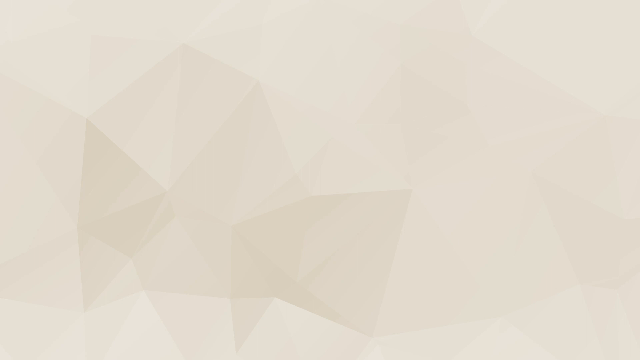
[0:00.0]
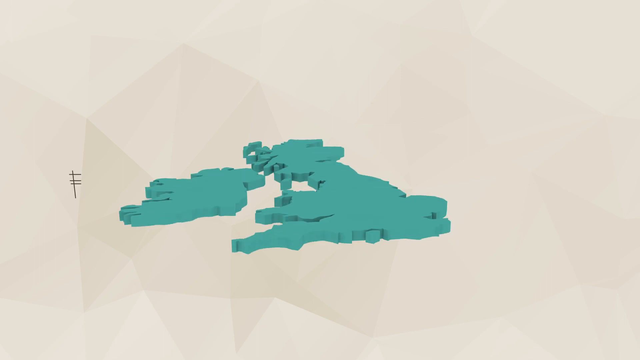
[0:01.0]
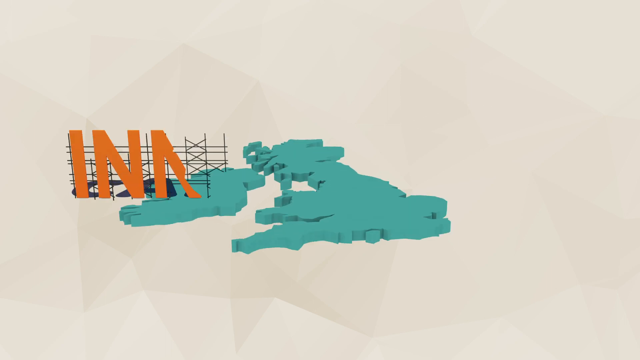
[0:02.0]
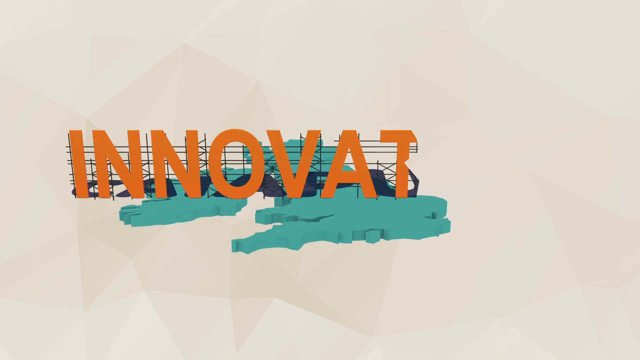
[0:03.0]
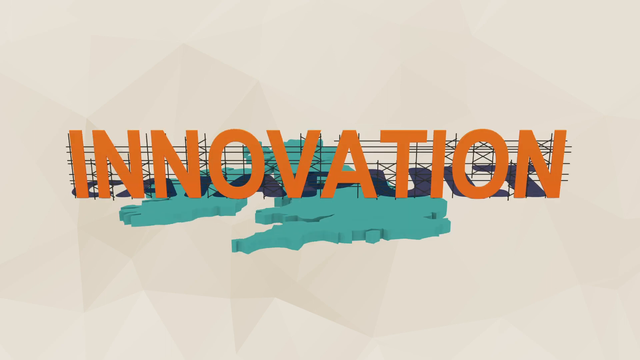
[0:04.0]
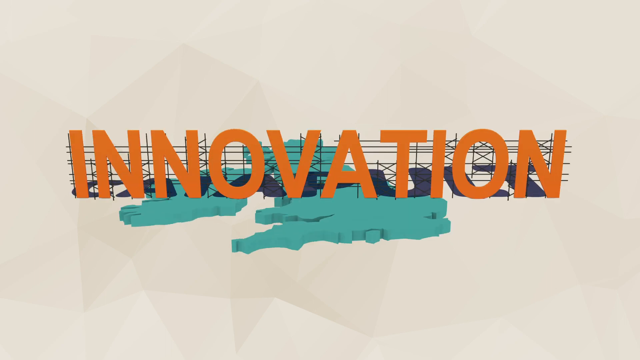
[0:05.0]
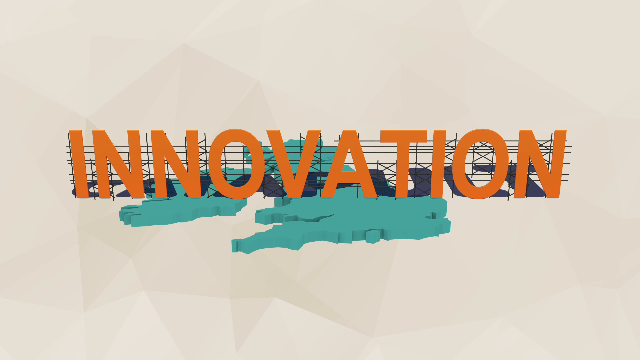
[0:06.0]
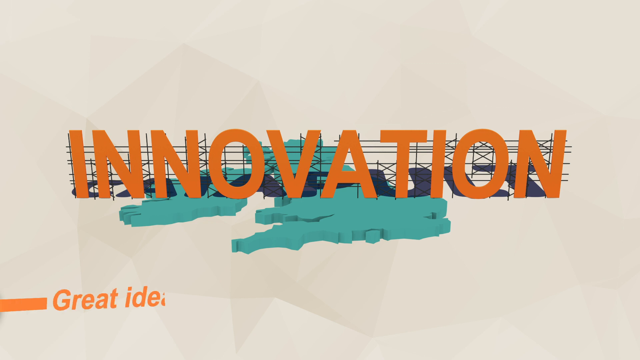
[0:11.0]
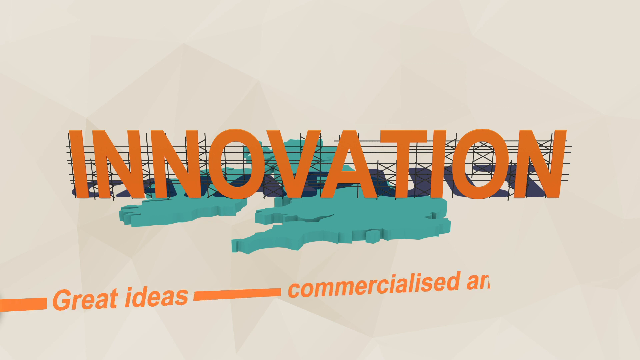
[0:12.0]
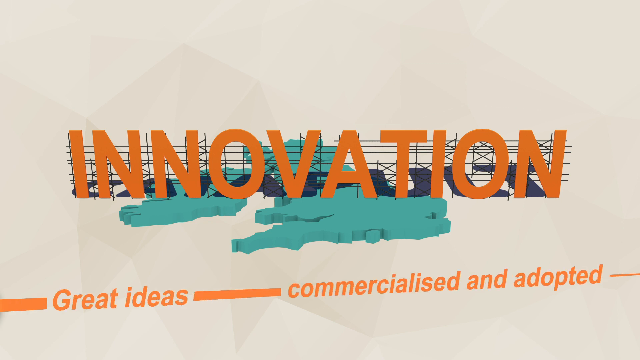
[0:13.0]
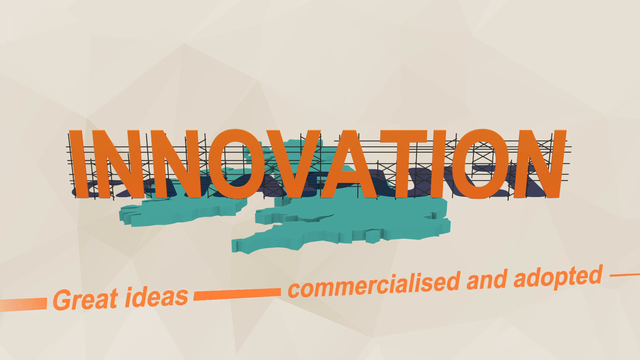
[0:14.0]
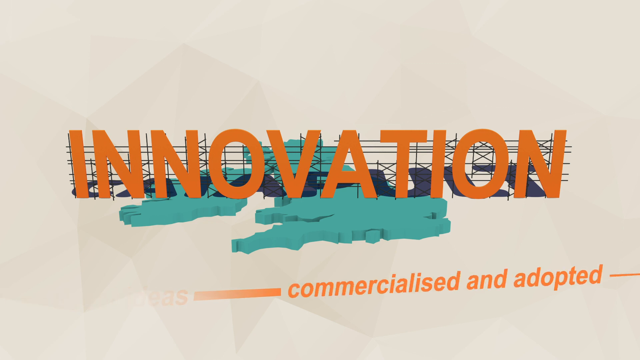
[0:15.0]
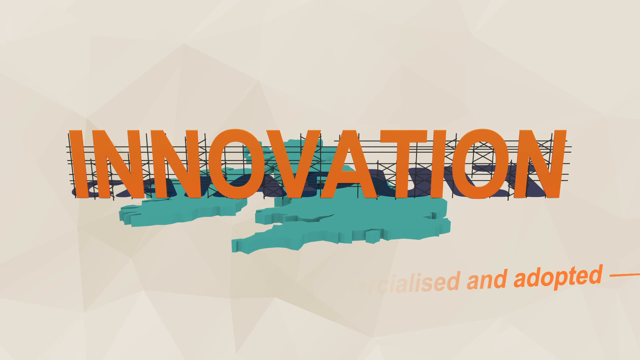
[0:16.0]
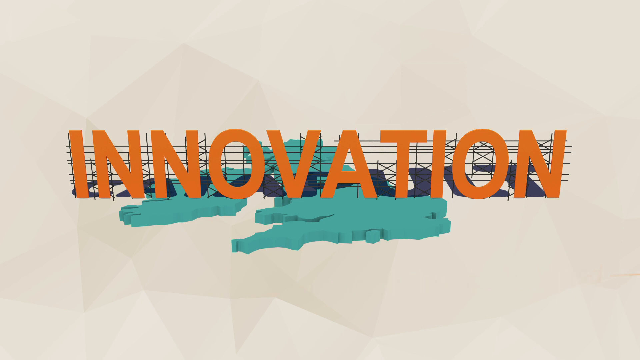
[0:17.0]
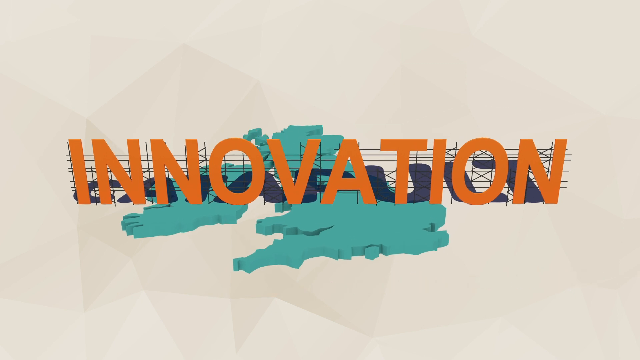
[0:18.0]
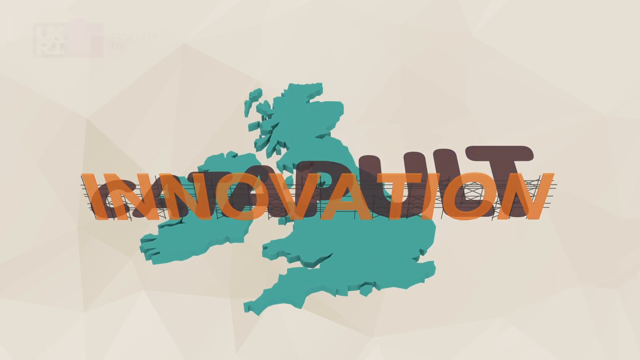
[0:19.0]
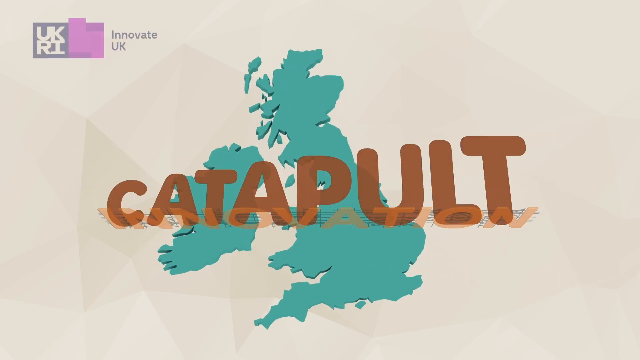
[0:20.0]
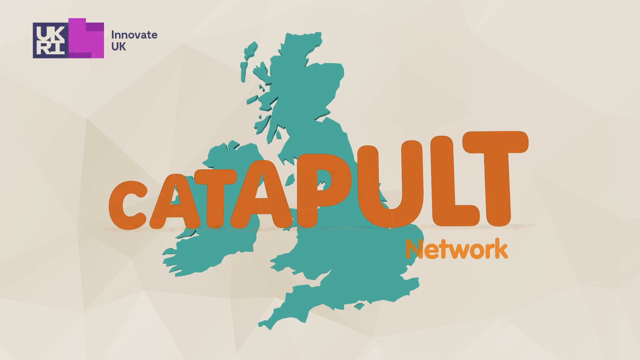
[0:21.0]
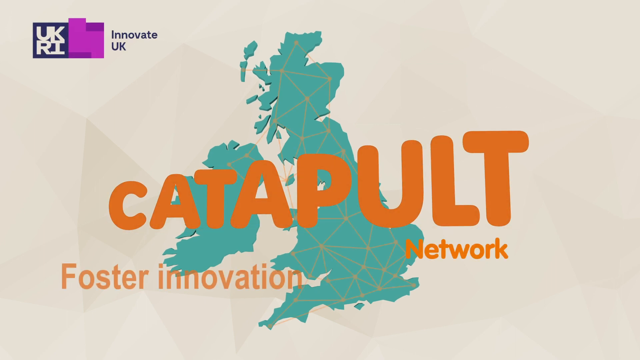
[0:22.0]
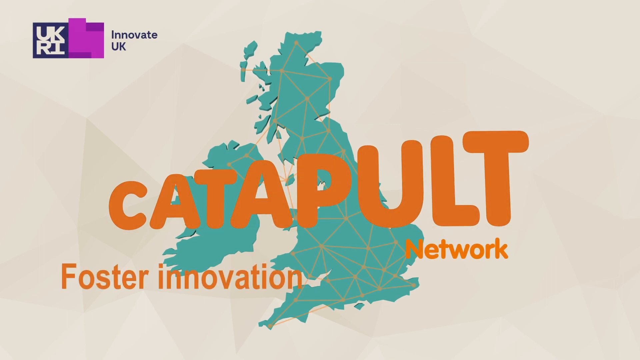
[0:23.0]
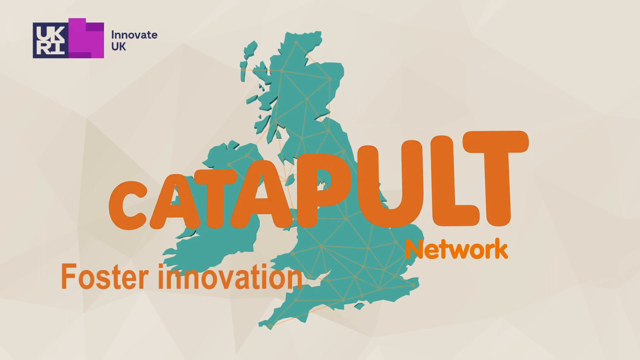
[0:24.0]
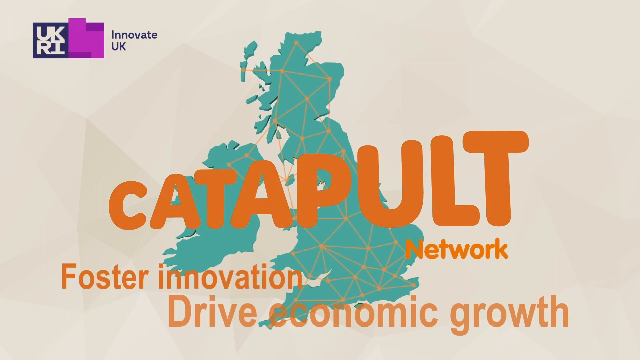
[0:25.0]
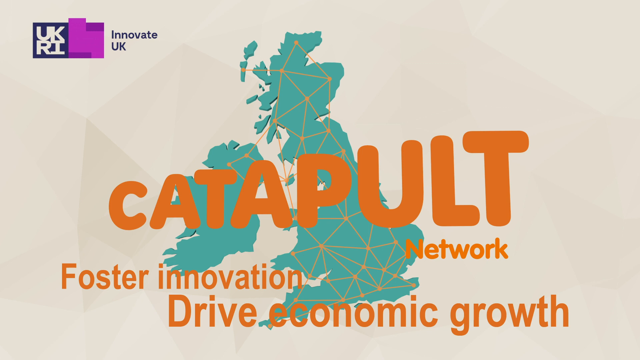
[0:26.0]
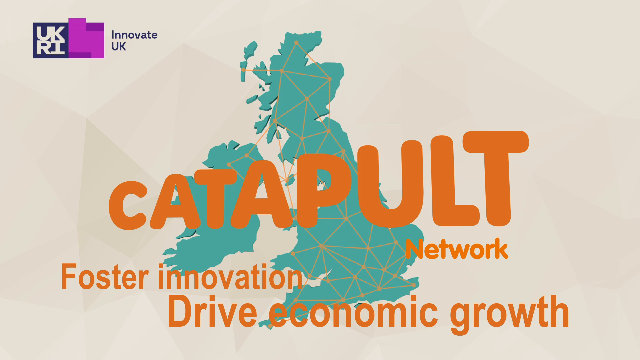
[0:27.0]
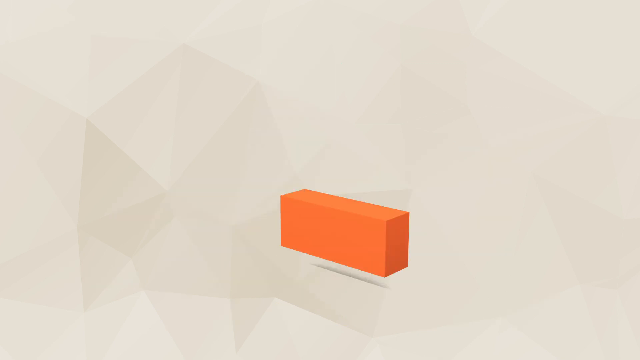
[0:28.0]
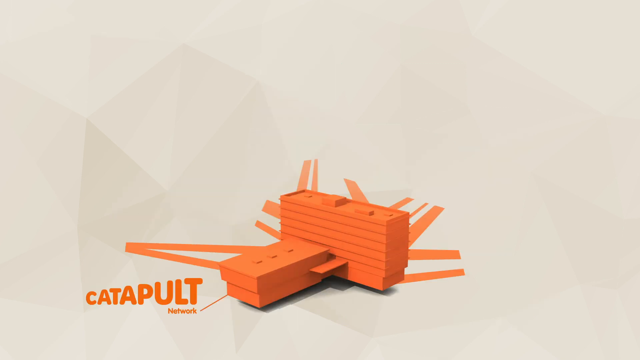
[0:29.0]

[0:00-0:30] A short animation or infographic features UKRI and Innovate UK, their network of research, and their influence in academia, from research to innovation and the adoption of ideas across the United Kingdom. Orange colours are overlaid on a green United Kingdom, labelled as the catapult network. The word "catapult" increases in size and links to industry, research and apparently academia.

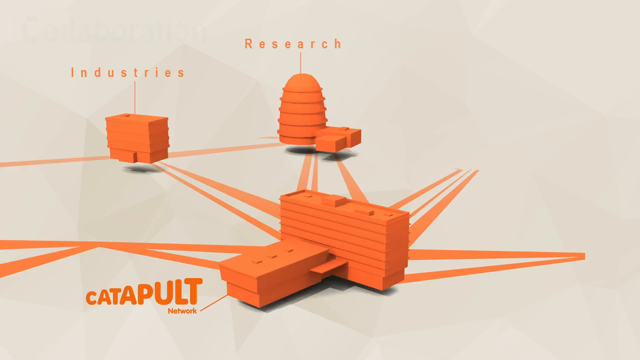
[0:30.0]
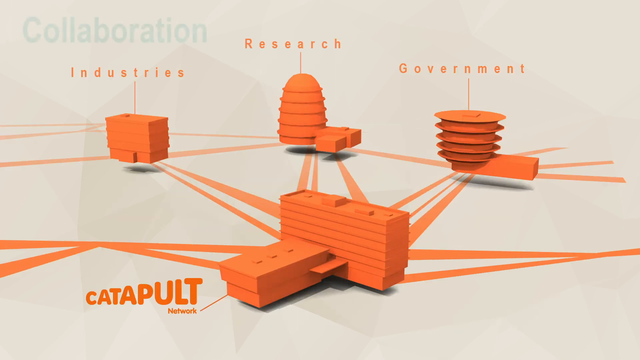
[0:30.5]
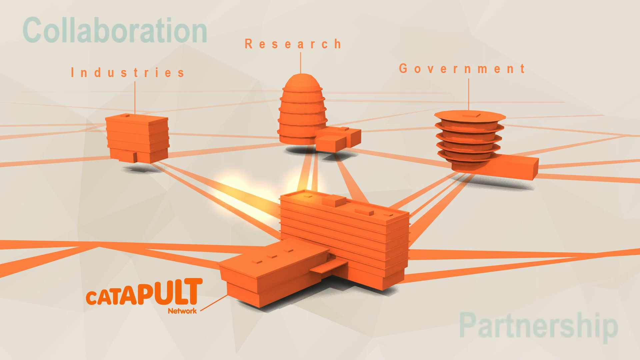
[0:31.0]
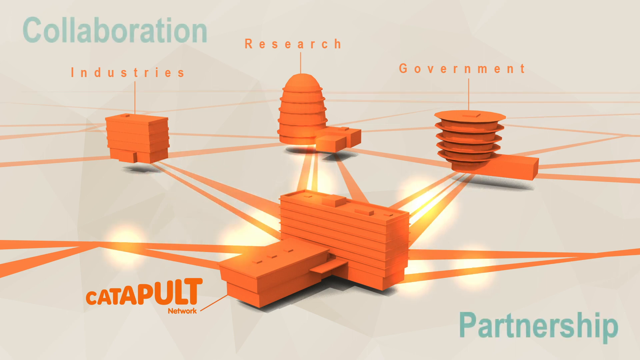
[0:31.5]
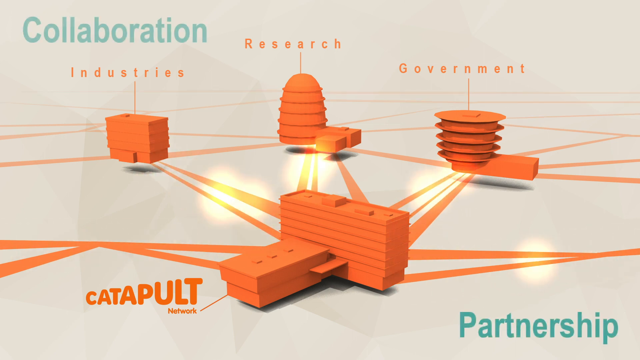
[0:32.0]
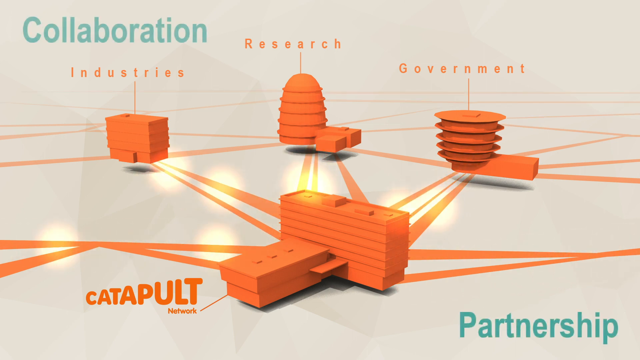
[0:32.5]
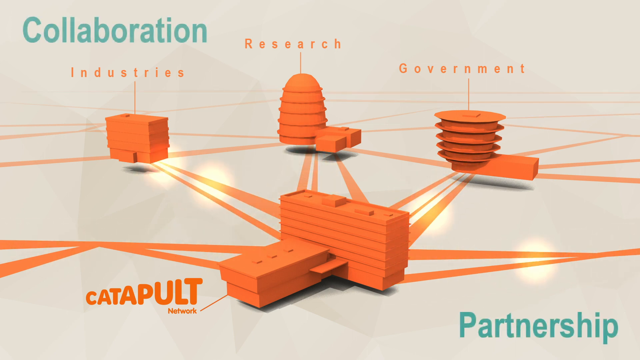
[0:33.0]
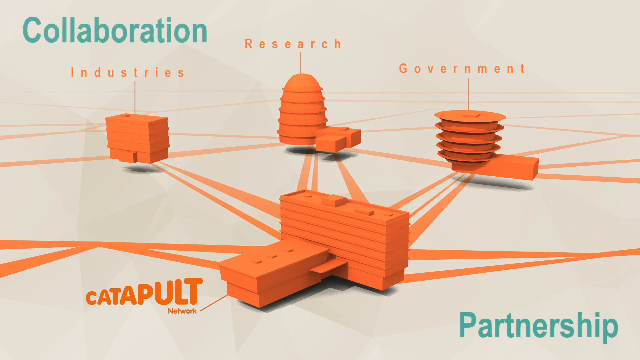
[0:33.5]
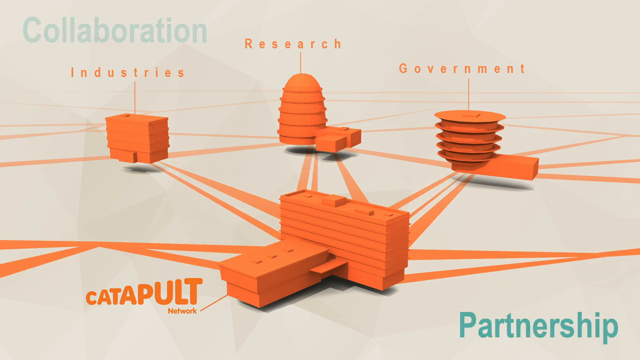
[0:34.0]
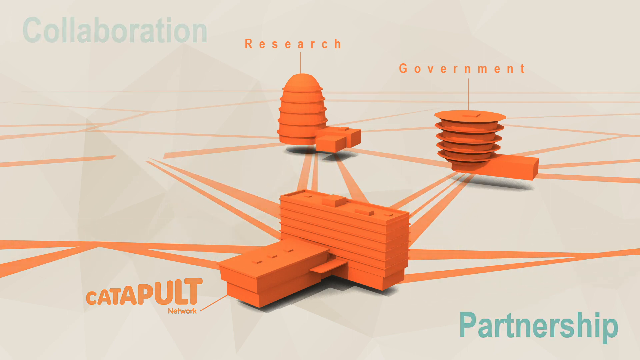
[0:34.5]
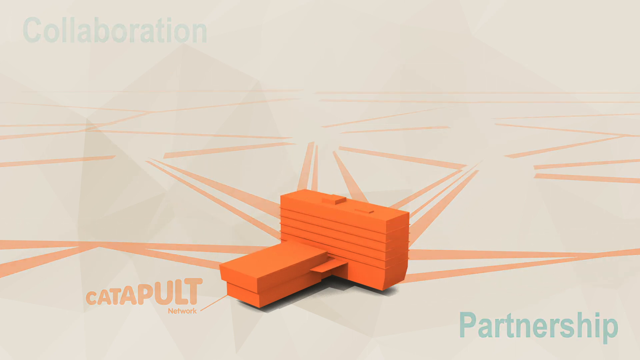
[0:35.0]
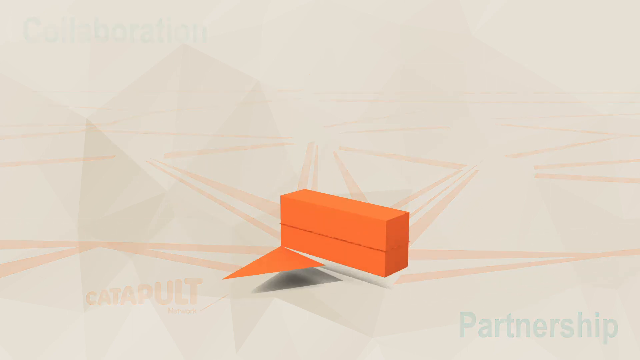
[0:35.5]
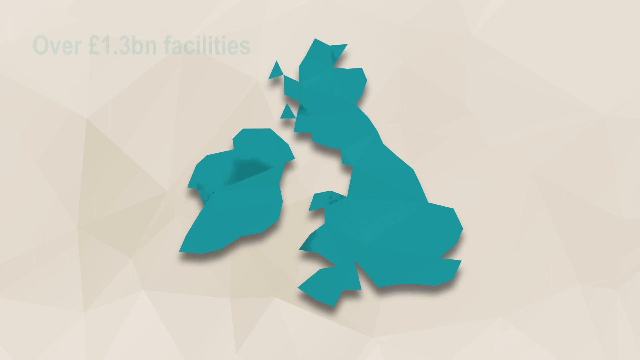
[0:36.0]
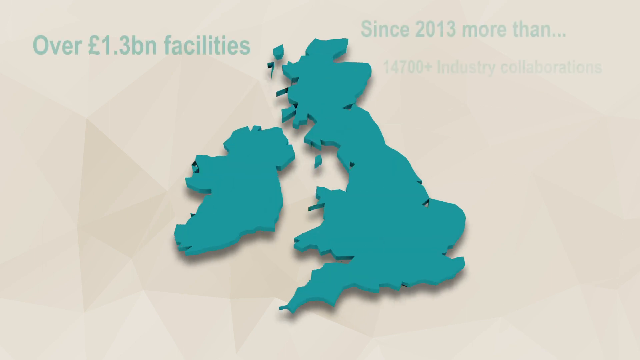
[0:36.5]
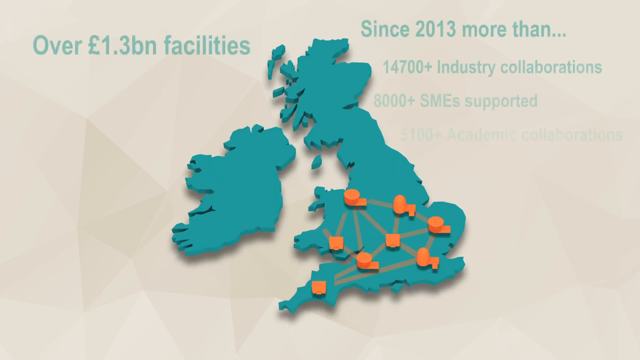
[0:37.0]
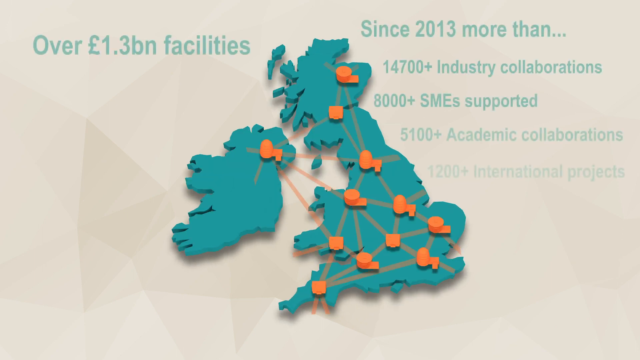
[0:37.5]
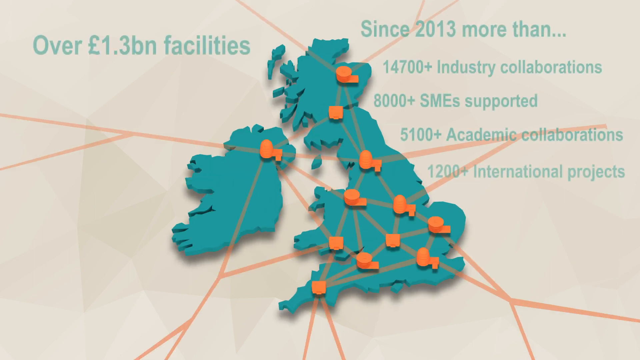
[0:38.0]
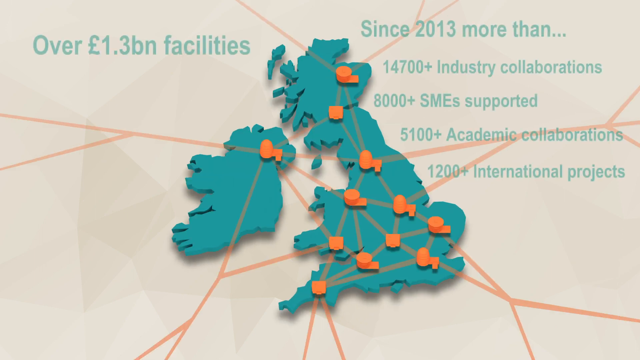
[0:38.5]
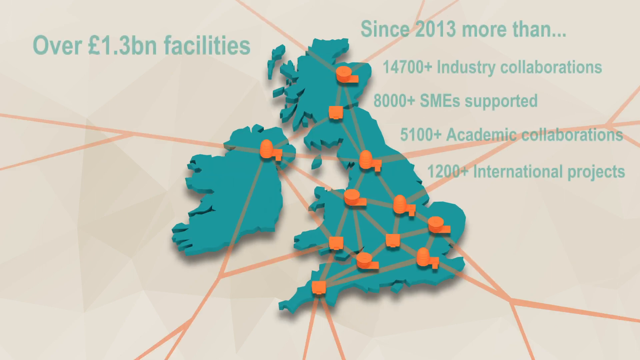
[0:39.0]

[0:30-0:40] The video presents the UKRI collaboration Catapult Partnership, showing that since 2013 there has been a wealth of projects, networks and connections across the United Kingdom. Many images show the connection between government, research, industry and £1.3 billion worth of facilities, presented on an image of the United Kingdom with detailed sections.